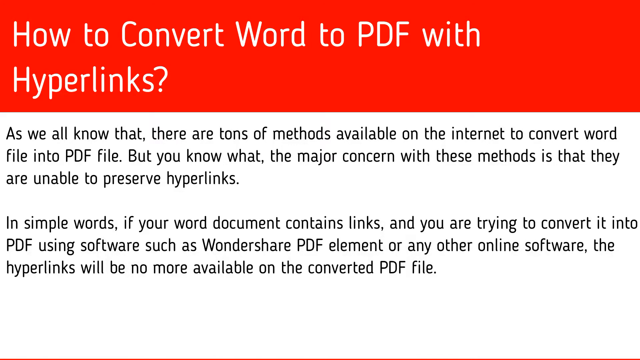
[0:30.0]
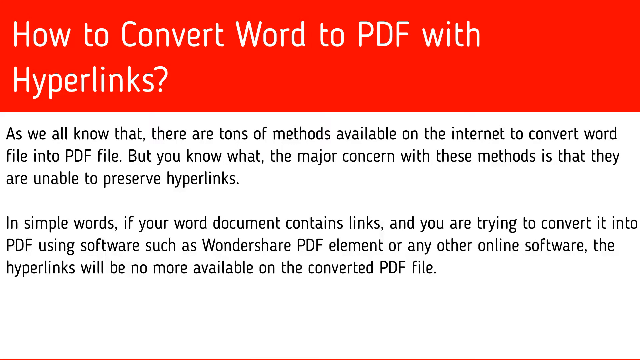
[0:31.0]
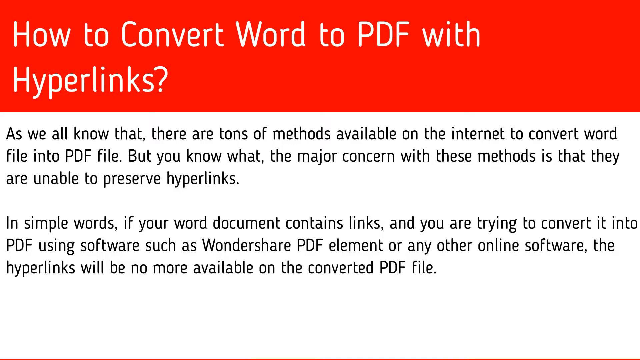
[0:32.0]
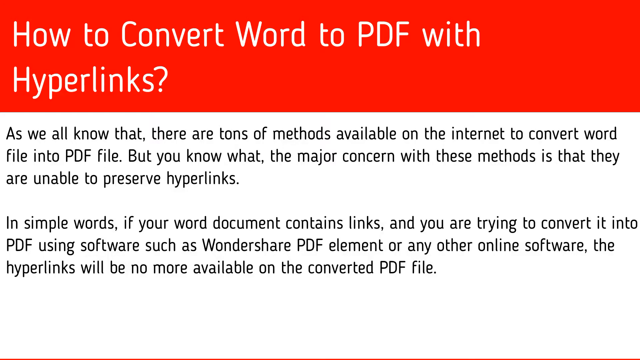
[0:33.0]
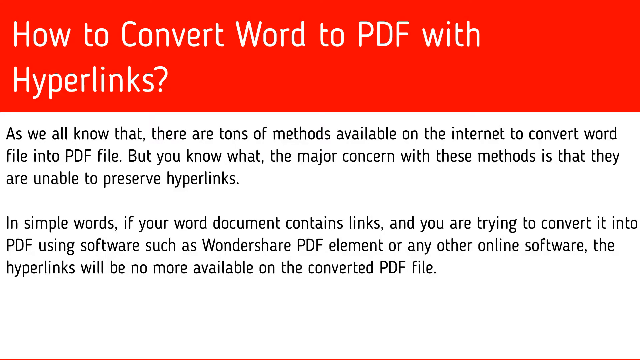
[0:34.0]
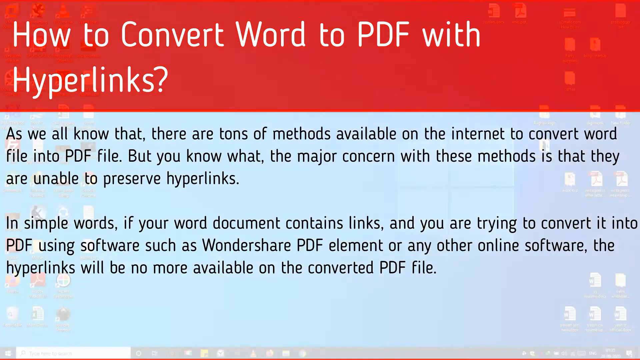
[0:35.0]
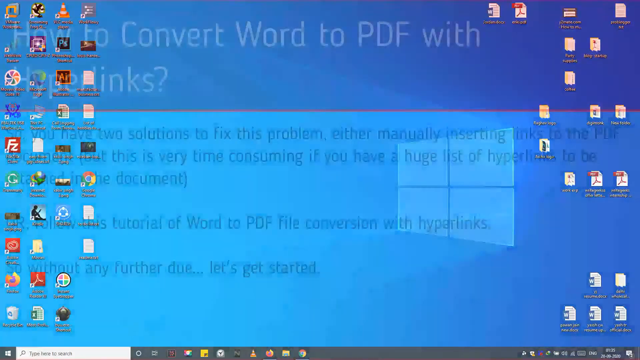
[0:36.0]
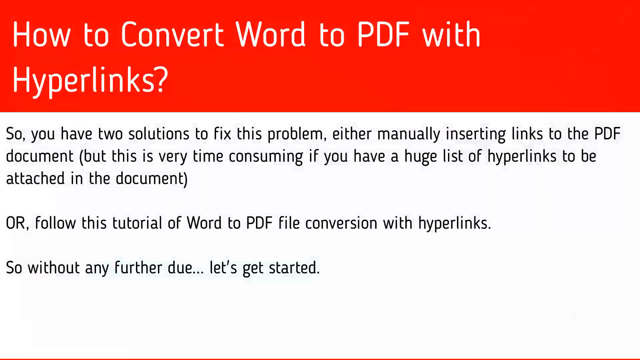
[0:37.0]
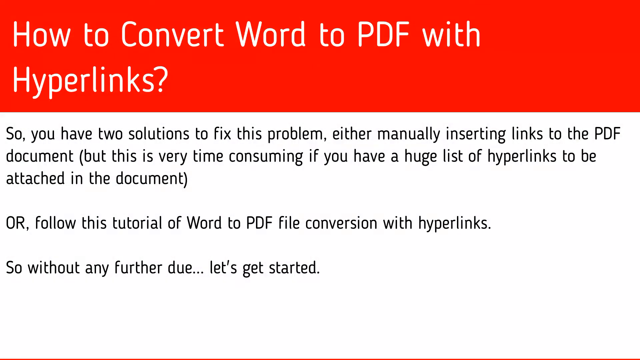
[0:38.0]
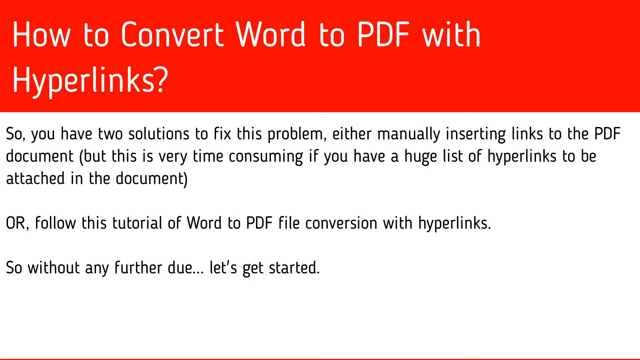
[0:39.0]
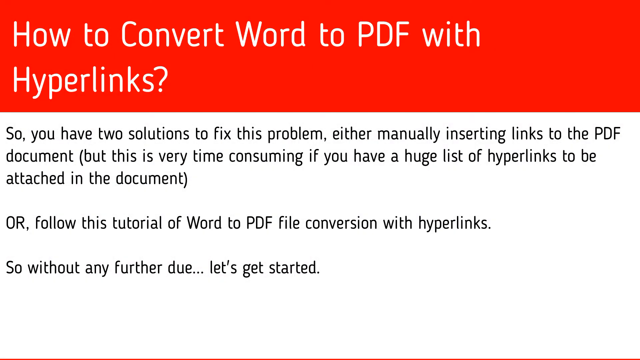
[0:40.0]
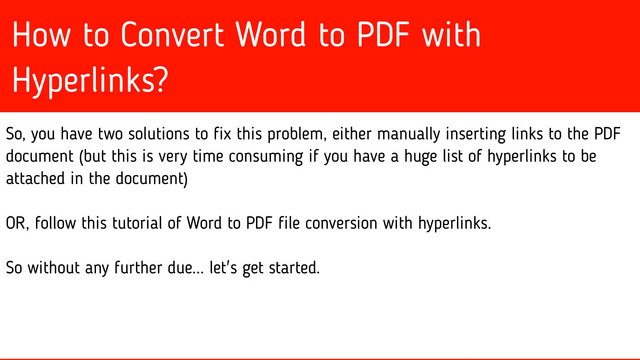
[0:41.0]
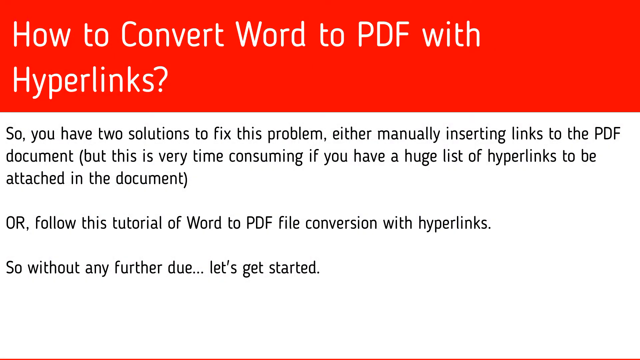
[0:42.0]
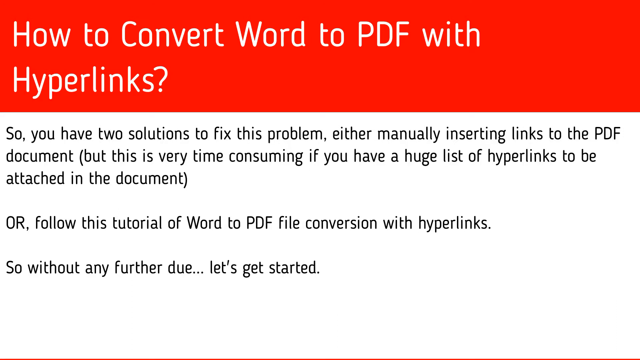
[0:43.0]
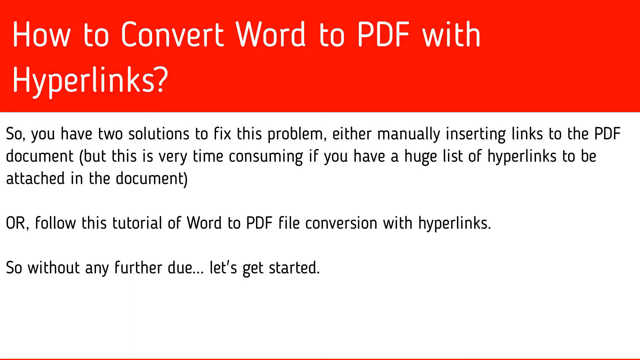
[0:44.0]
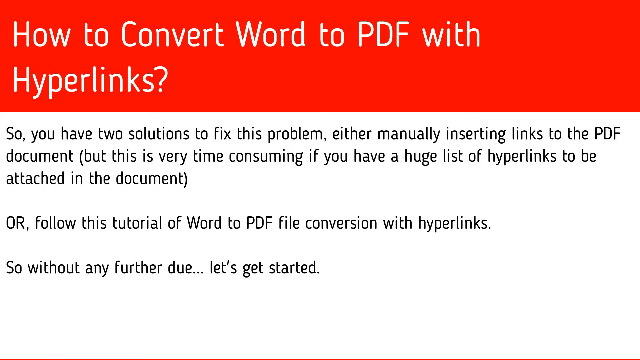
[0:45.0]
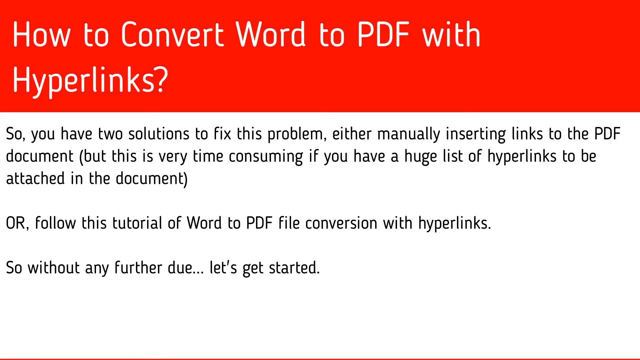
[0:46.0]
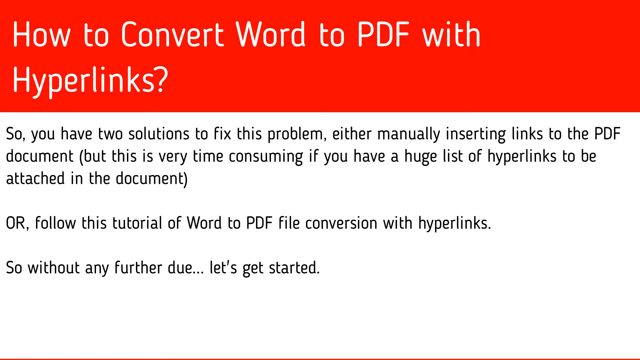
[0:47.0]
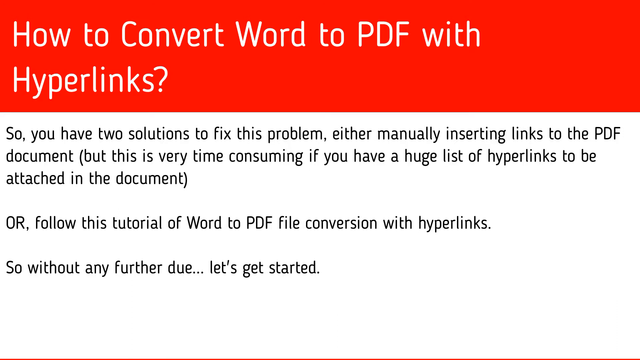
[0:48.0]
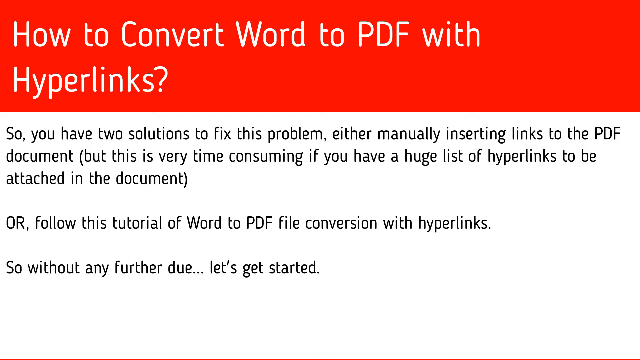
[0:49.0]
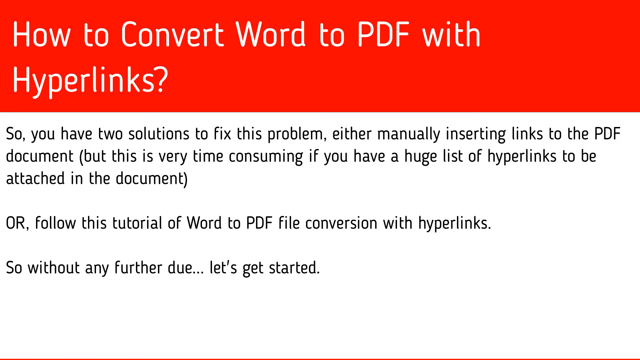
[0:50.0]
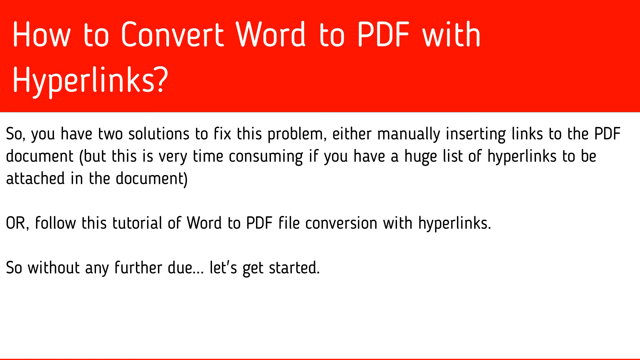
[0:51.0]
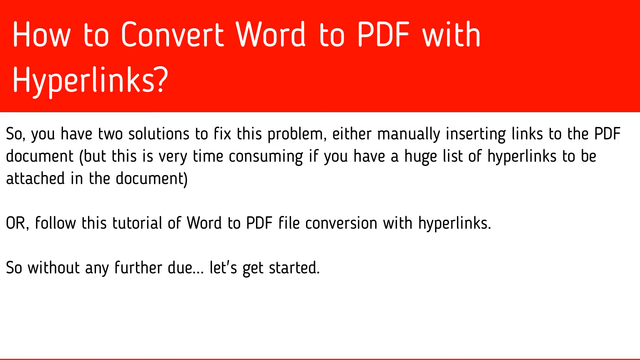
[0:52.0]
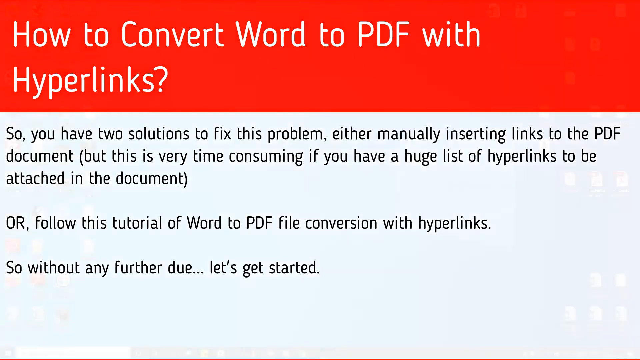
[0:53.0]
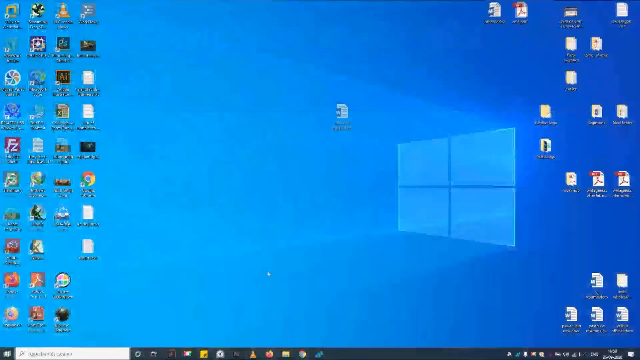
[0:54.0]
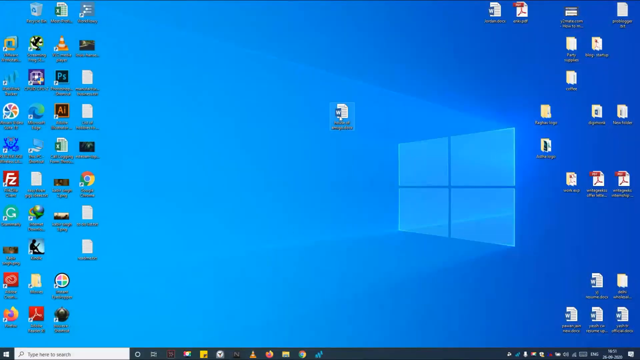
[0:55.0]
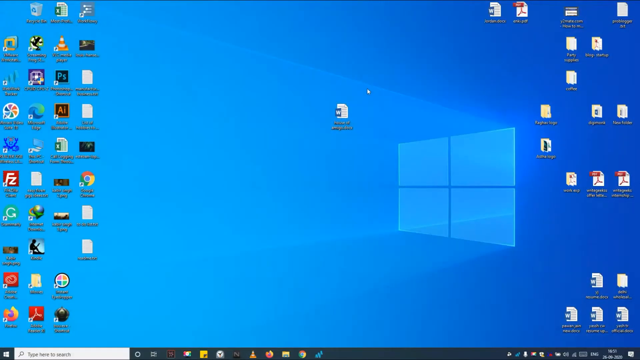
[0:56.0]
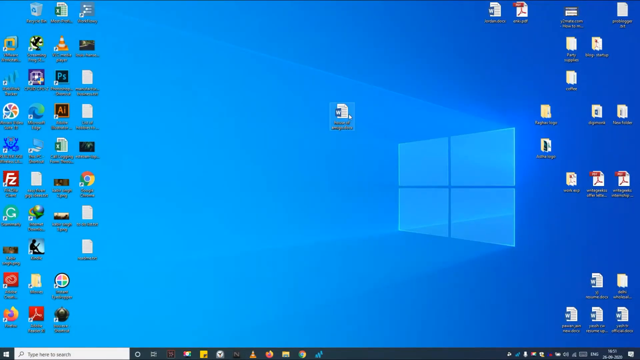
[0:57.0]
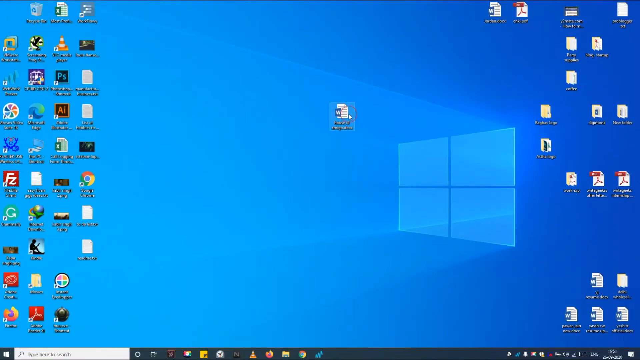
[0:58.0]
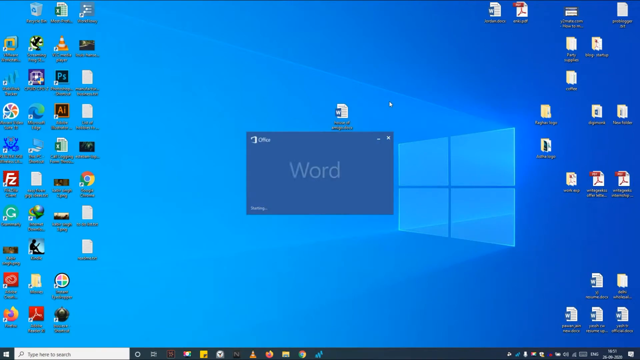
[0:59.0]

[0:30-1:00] The video fades into a Windows desktop with a blue Windows logo on a blue background and lots of icons on the left and right sides of the screen, which quickly fades into a new slide. At the top is the same title on a red rectangle. At the bottom, black text on a white background reads "So if you have two solutions to fix this problem, either manually insert links to the PDF document (but this is very time consuming if you have a huge list of hyperlinks to be attached in the document)", and underneath it "or follow this tutorial of Word to PDF file conversion with hyperlinks. And so without any further ado... let's get started."